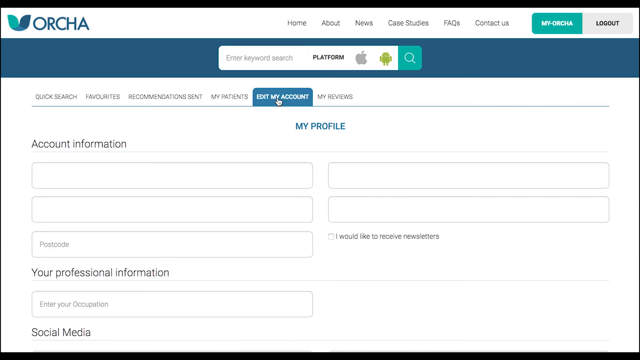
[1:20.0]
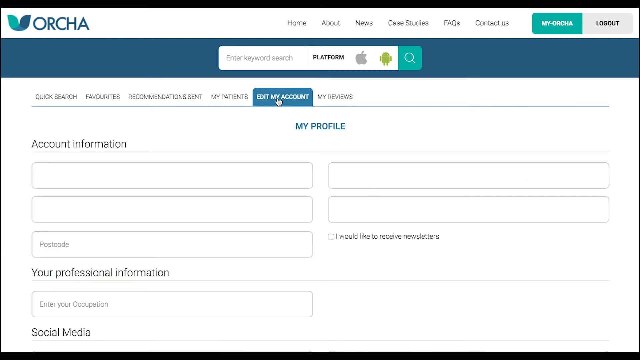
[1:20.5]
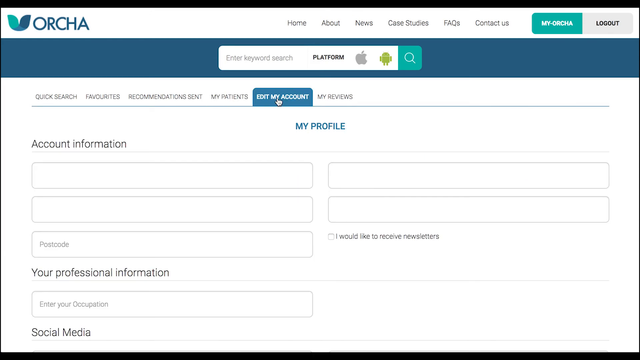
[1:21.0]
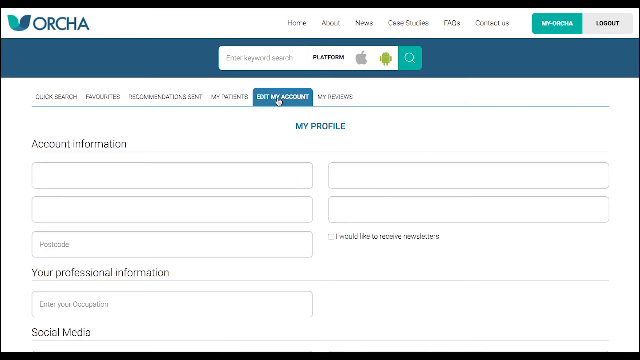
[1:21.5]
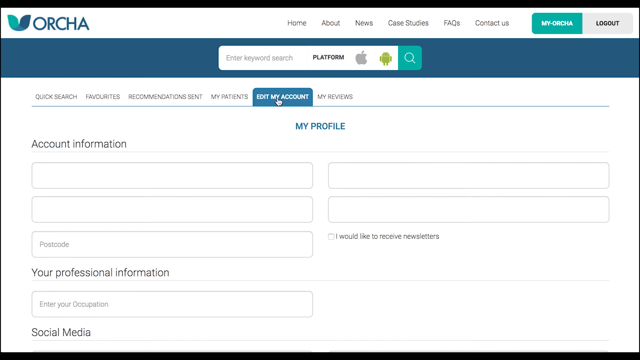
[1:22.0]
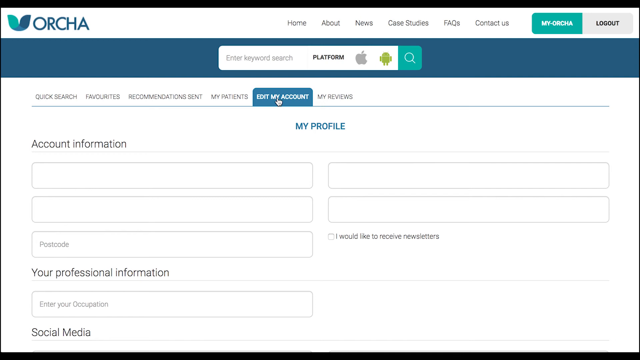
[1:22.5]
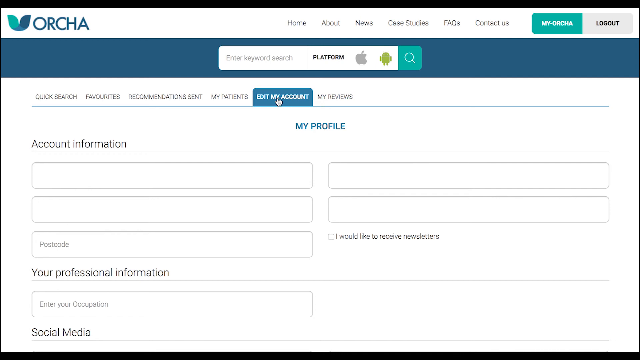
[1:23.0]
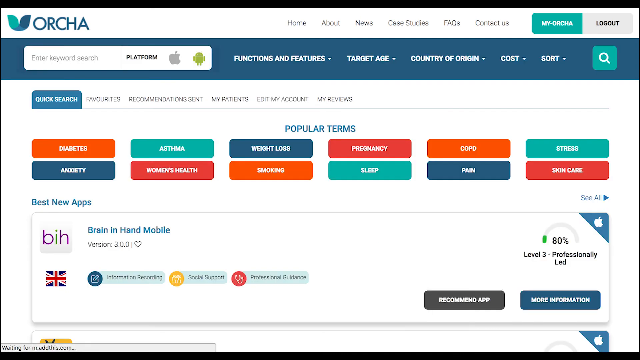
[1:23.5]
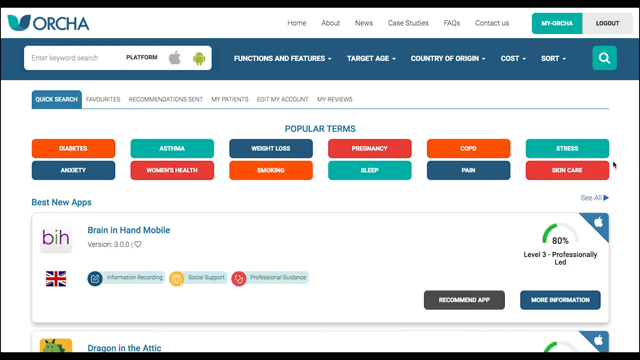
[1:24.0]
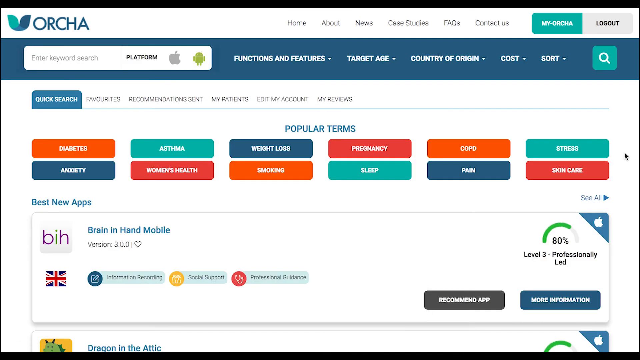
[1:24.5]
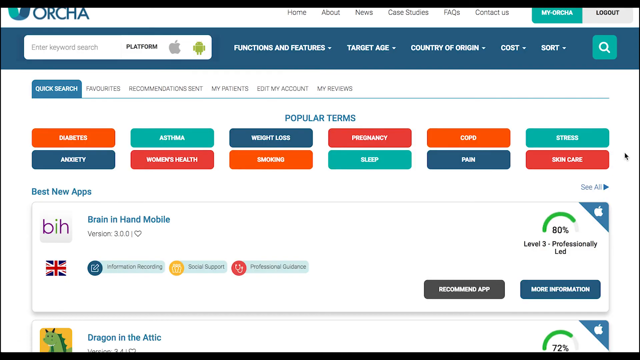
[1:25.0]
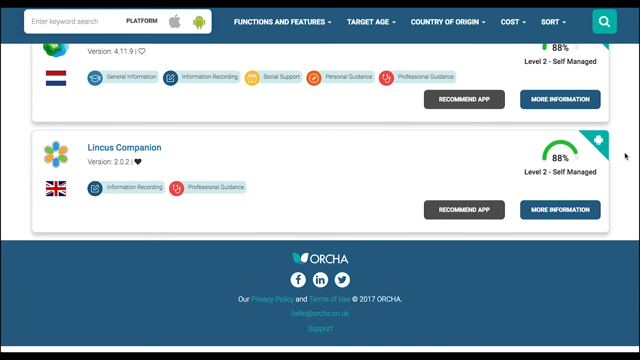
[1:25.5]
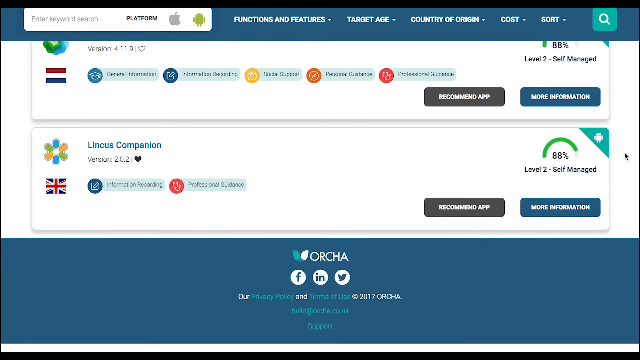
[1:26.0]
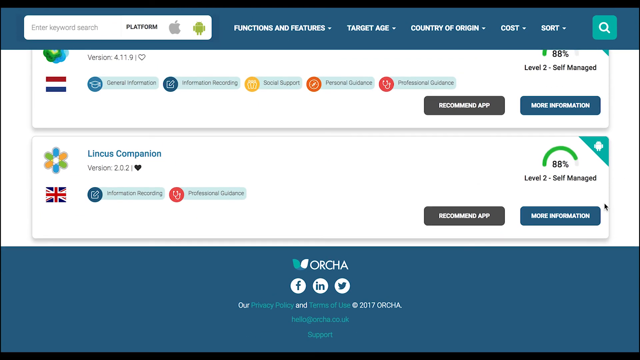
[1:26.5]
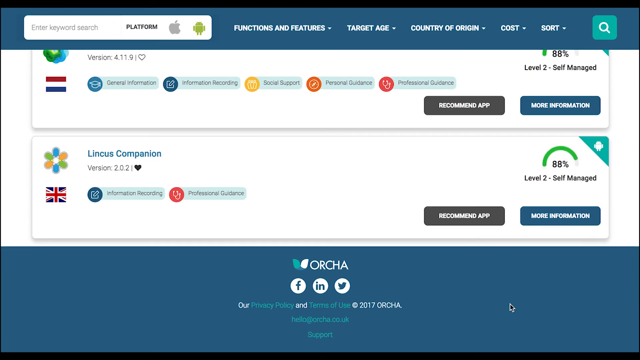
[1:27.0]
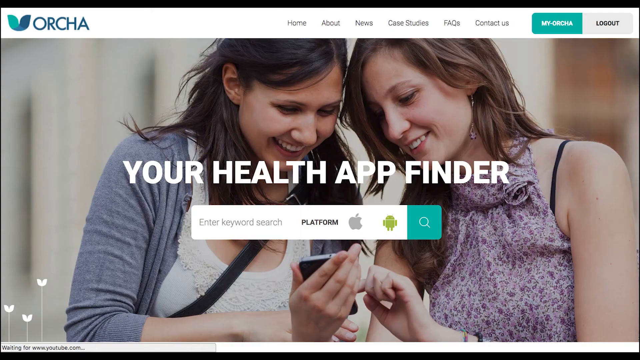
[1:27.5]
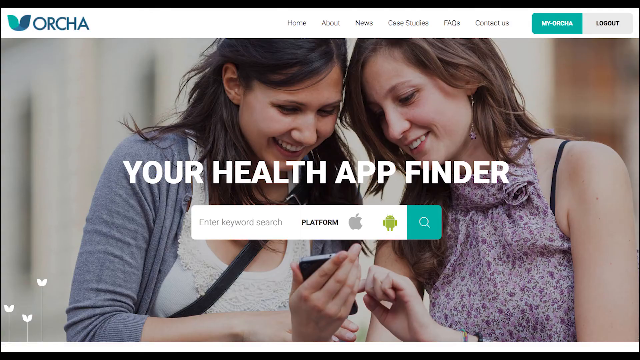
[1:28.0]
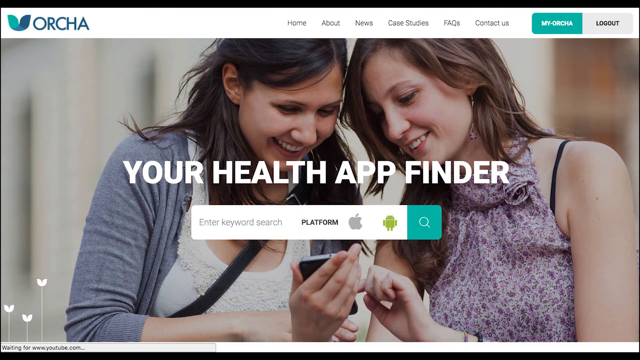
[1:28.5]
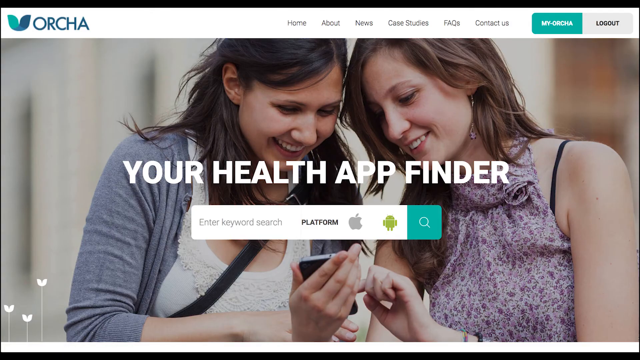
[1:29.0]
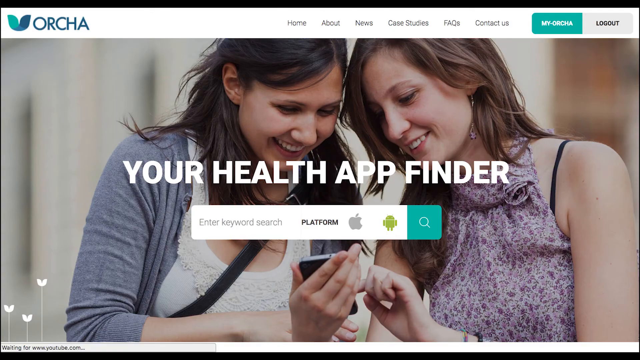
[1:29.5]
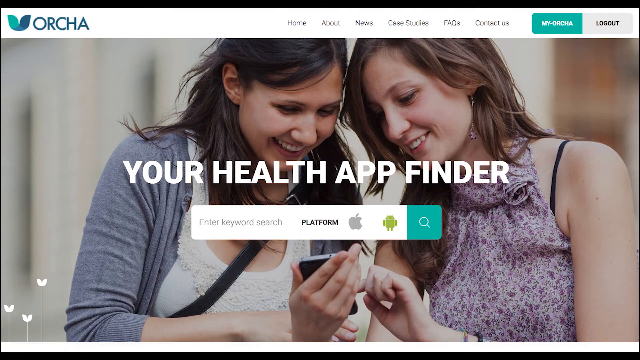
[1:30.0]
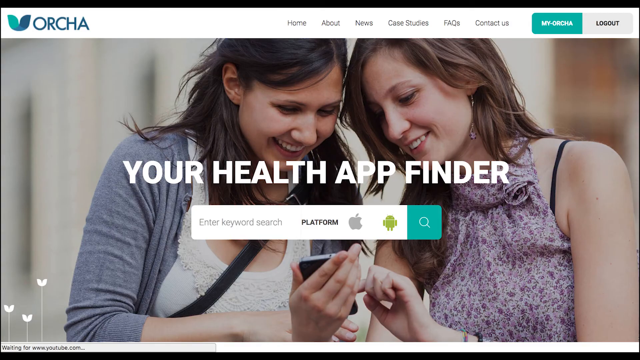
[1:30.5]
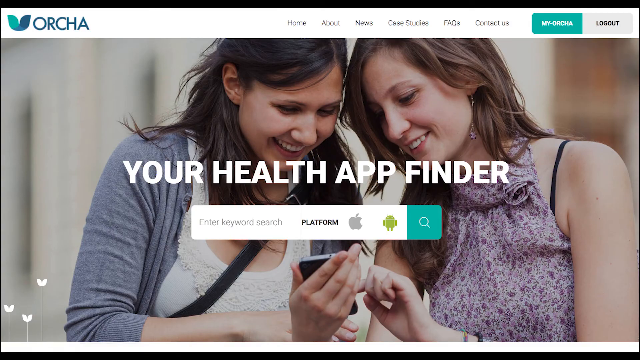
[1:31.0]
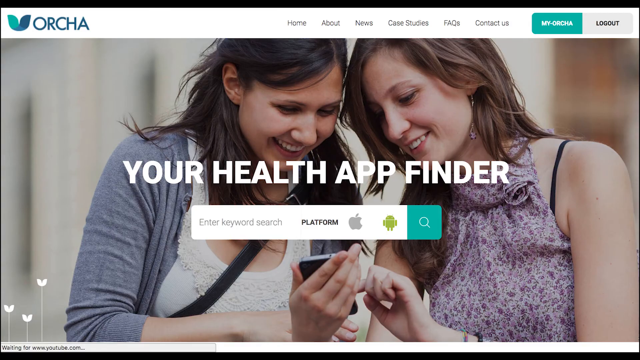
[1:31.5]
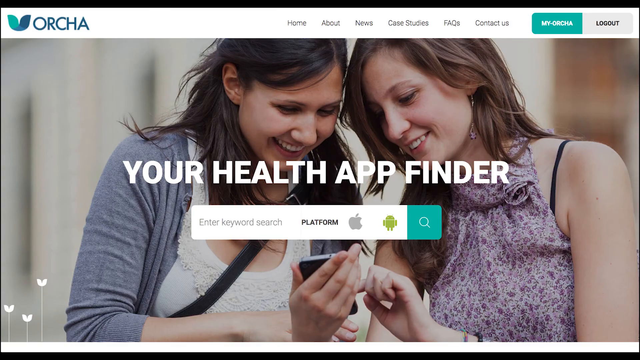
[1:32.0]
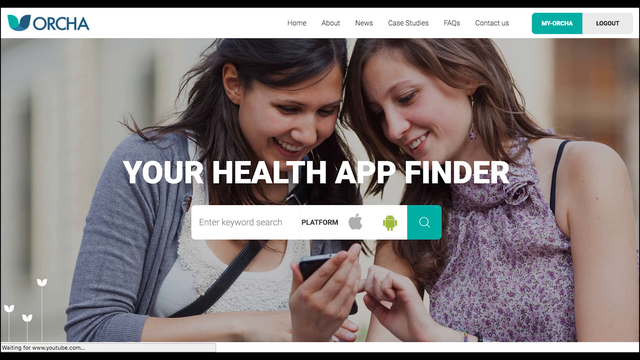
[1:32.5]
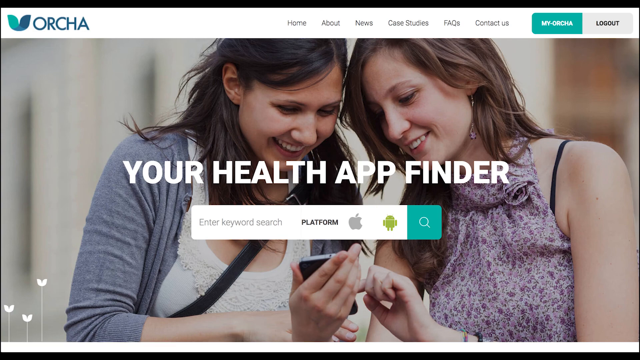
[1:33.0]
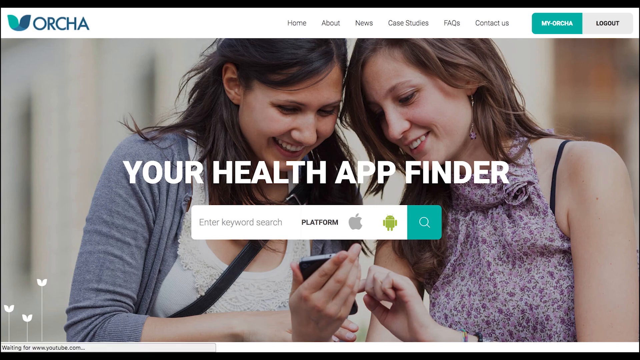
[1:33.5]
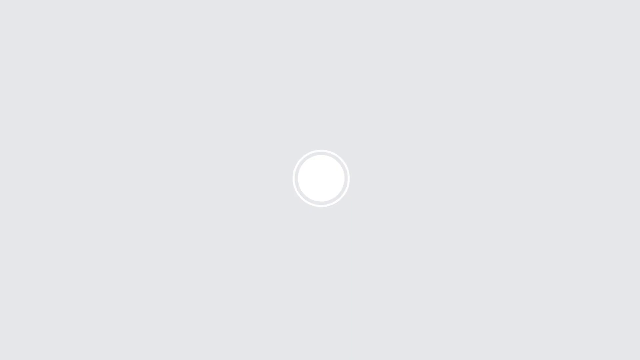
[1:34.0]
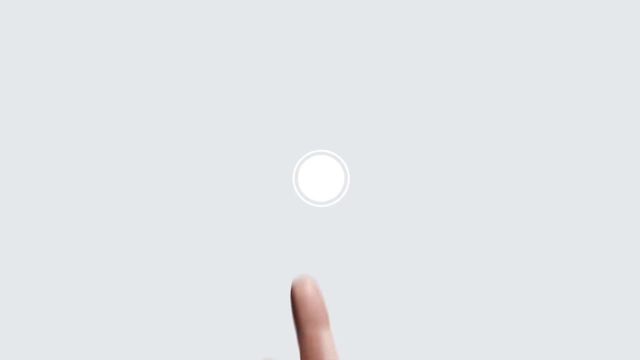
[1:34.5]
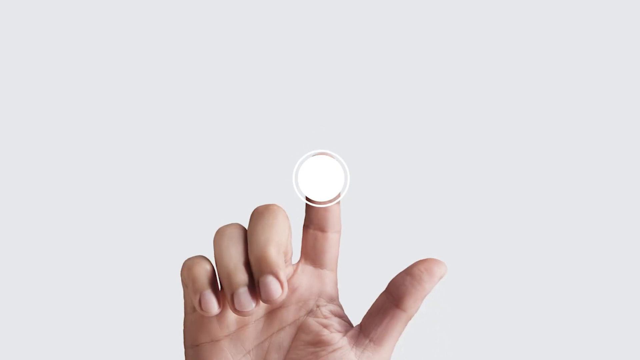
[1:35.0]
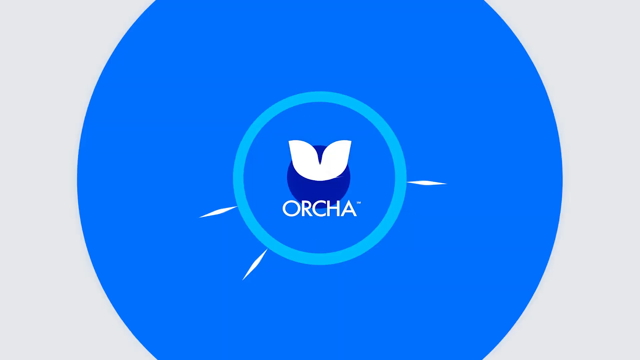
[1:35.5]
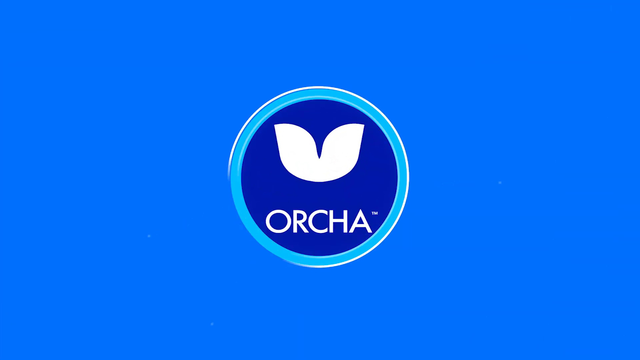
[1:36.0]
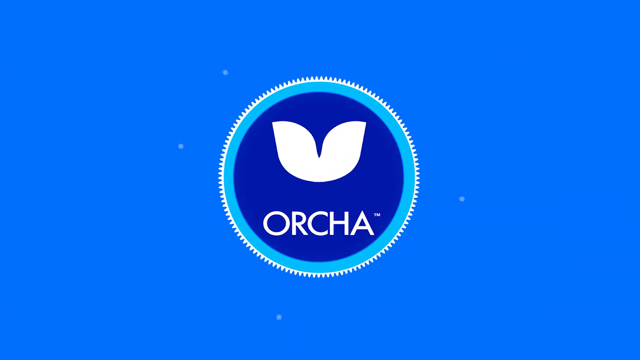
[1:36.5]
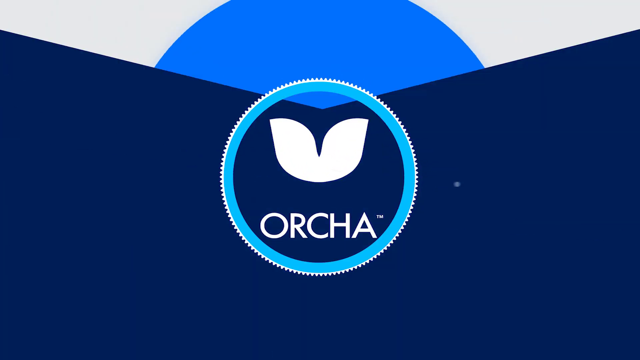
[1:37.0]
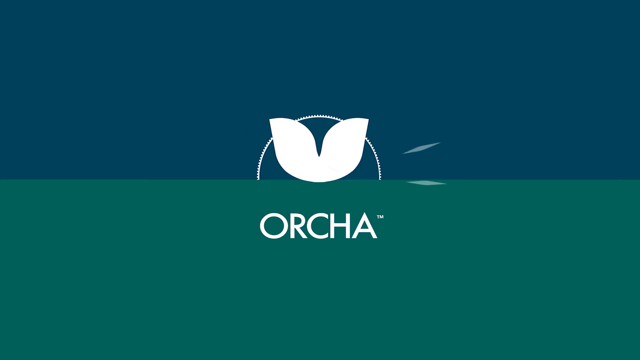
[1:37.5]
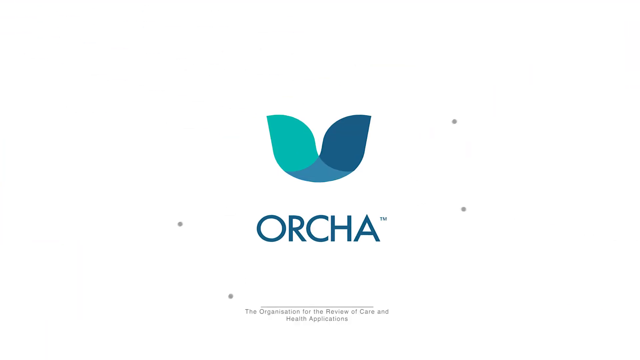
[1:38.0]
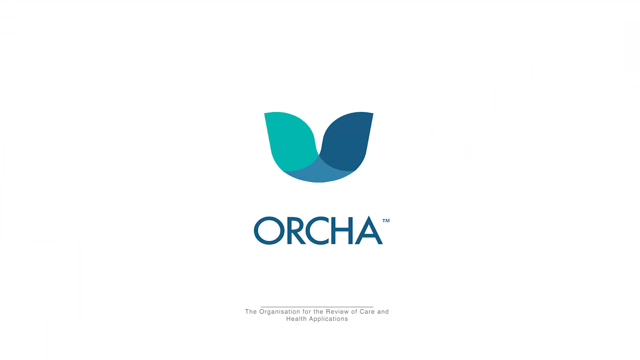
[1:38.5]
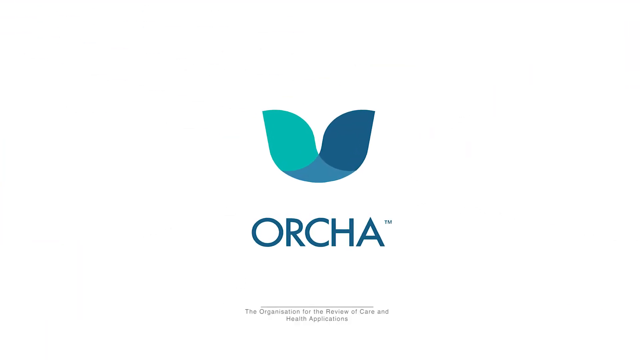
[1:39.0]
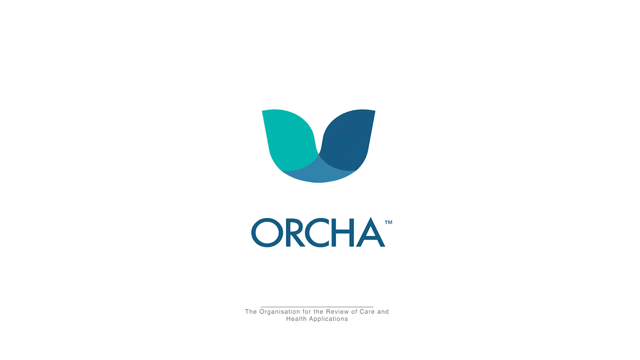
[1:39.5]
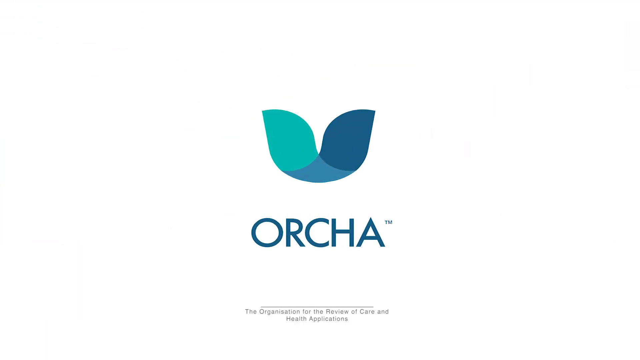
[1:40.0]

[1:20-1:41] The user goes back to the home quick search page, which features popular terms including diabetes, asthma, weight loss, pregnancy, COPD, stress, anxiety, women's health and smoking, and scrolls down to the list of apps. An animation of a white dot follows: a hand appears and an index finger touches the dot, which disintegrates and turns into the Orcha logo. It is a large round logo with a blue background and what appears to be two white leaves over the word Orcha. With an animation and transition effect, the logo then changes to blue: the leaf logo is three different shades of blue and the Orcha text is entirely blue. Towards the end, the user's navigation of the website appears more chaotic and somewhat random.